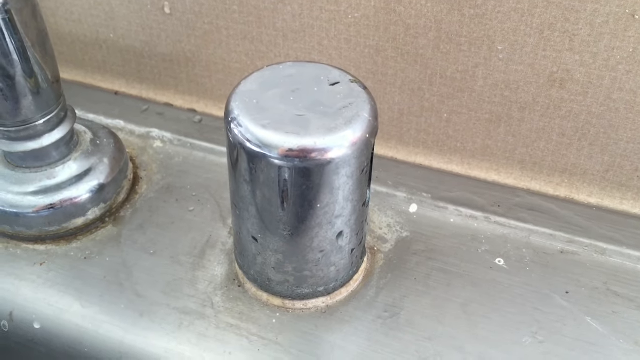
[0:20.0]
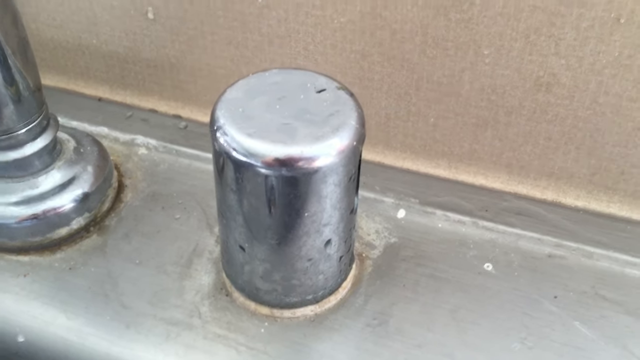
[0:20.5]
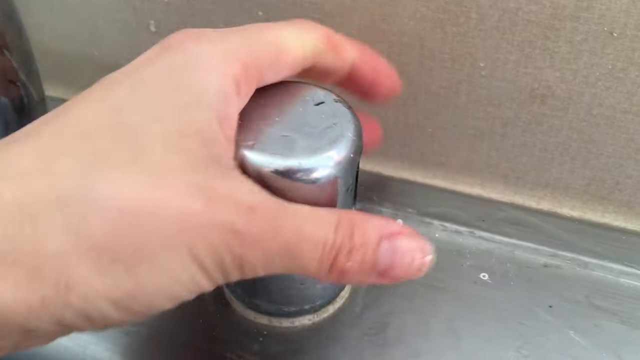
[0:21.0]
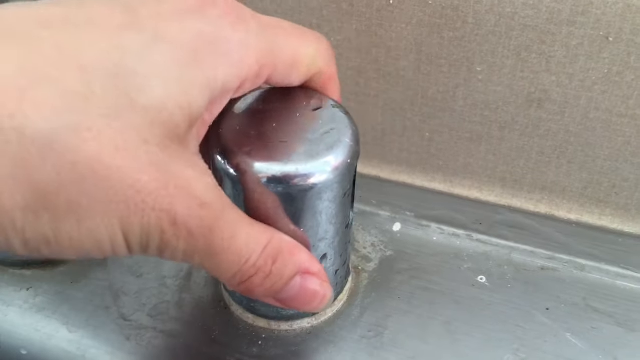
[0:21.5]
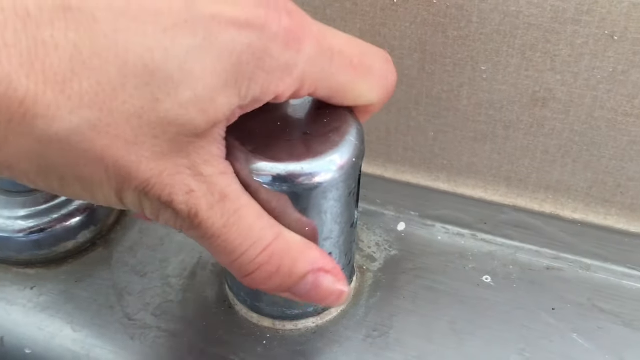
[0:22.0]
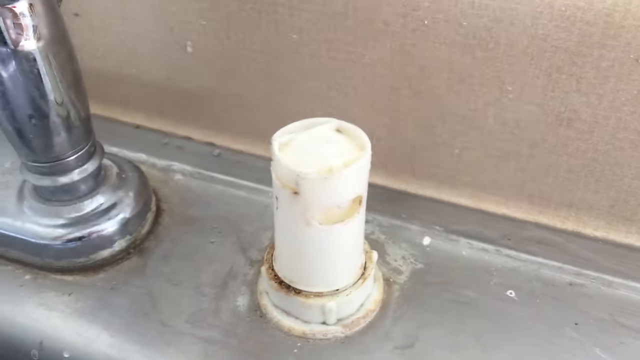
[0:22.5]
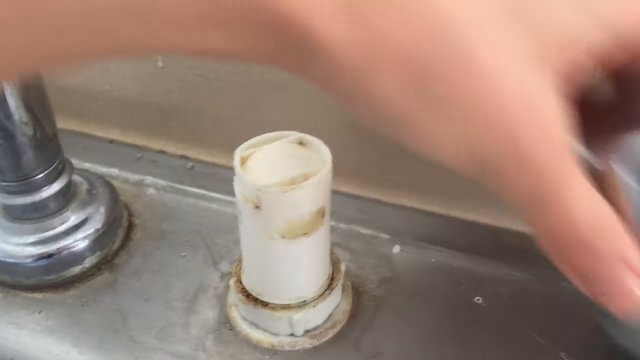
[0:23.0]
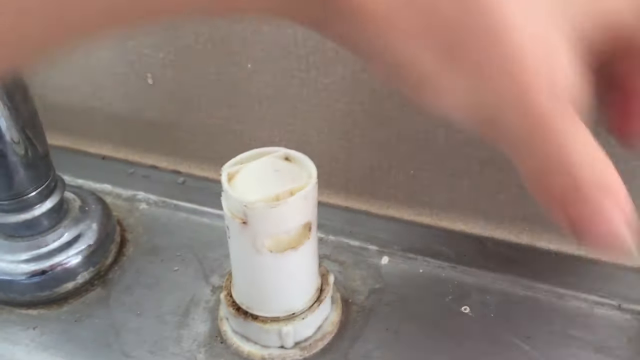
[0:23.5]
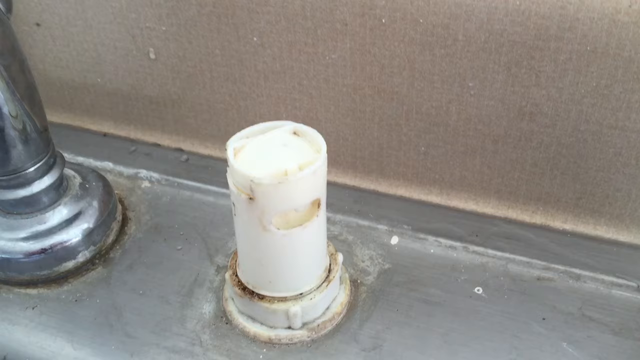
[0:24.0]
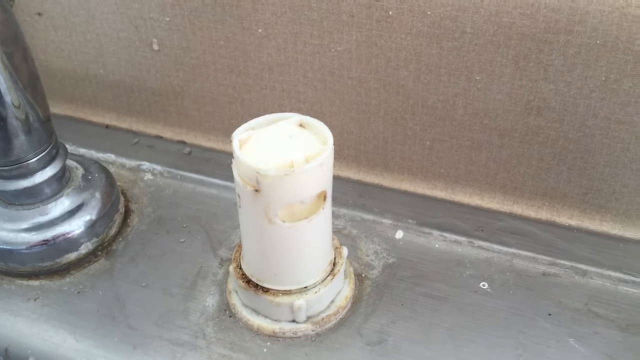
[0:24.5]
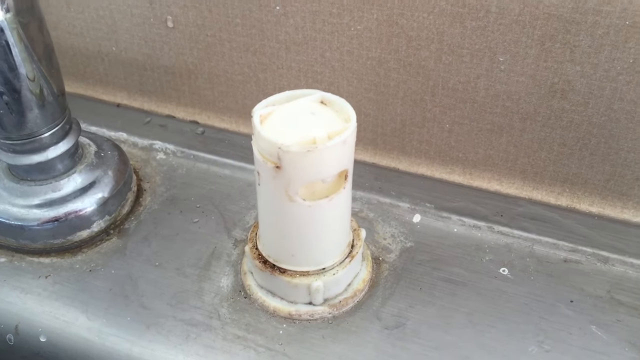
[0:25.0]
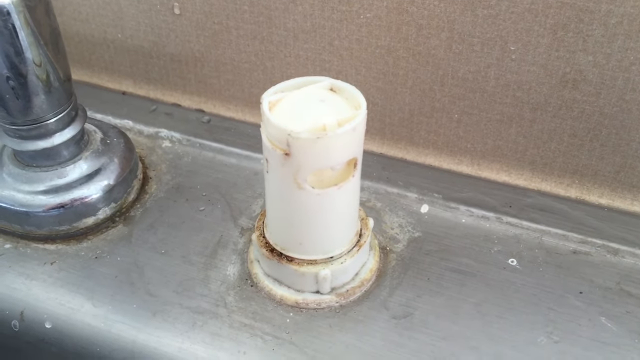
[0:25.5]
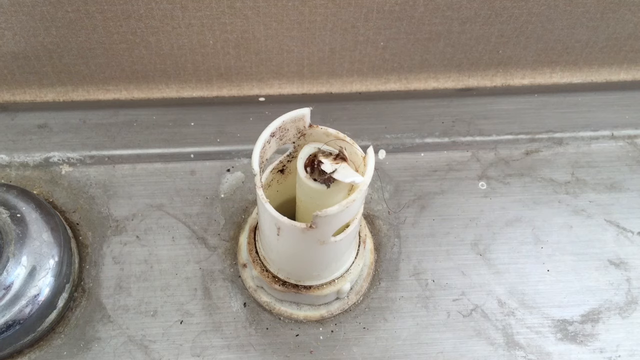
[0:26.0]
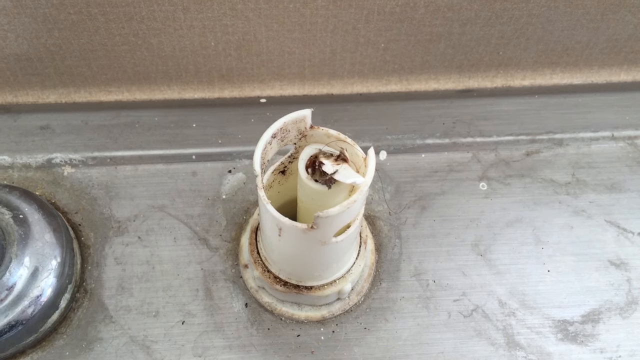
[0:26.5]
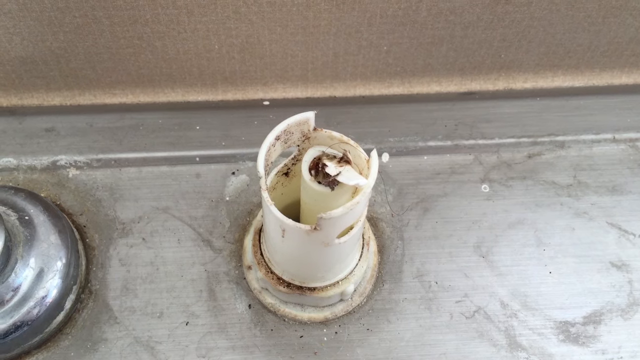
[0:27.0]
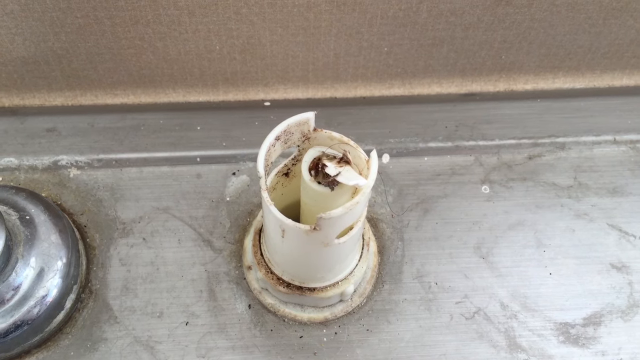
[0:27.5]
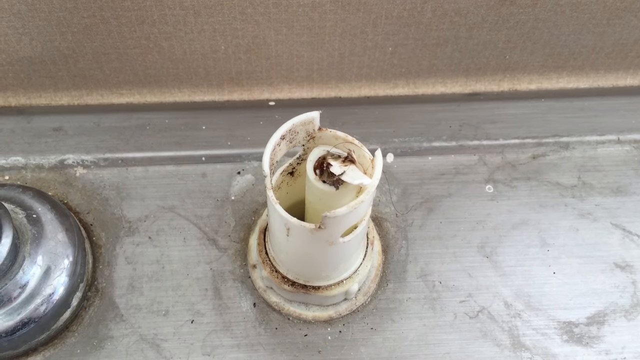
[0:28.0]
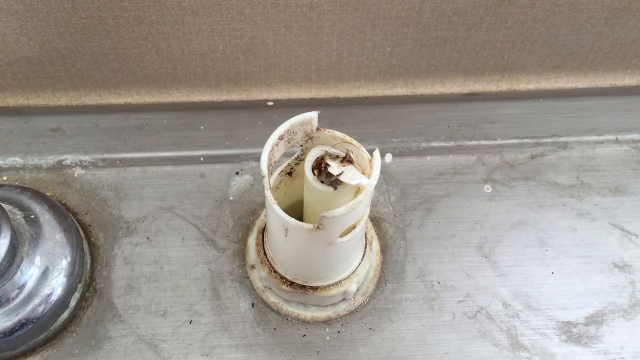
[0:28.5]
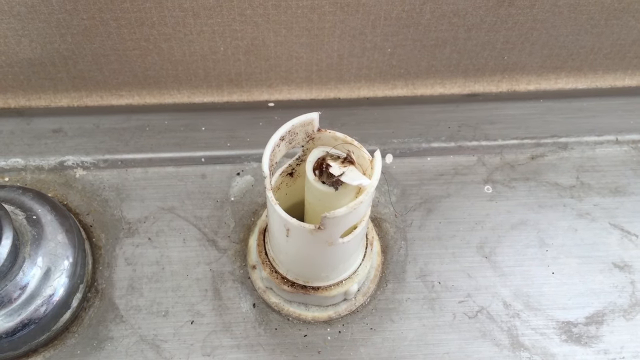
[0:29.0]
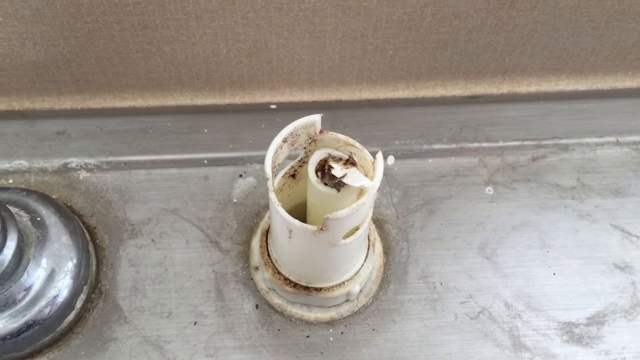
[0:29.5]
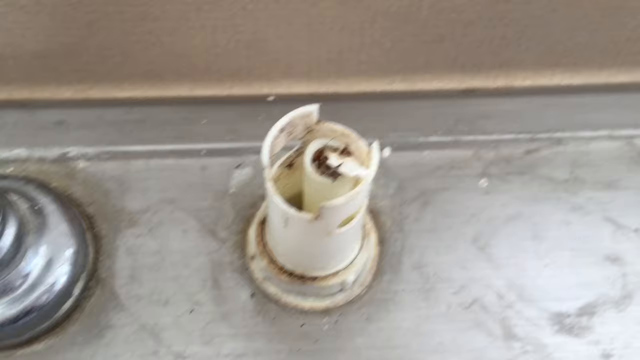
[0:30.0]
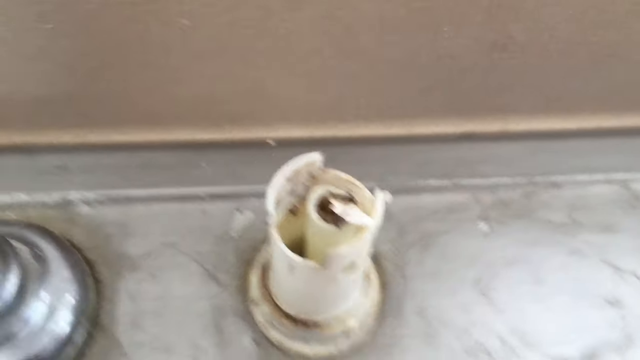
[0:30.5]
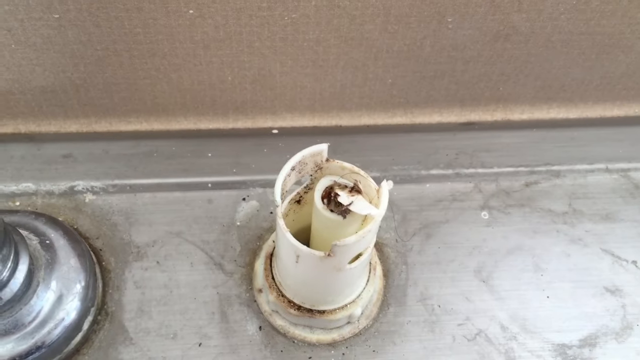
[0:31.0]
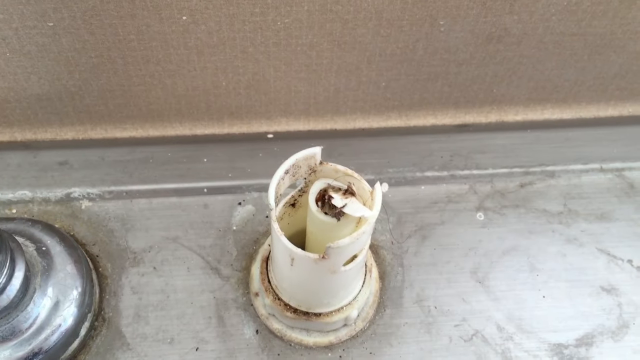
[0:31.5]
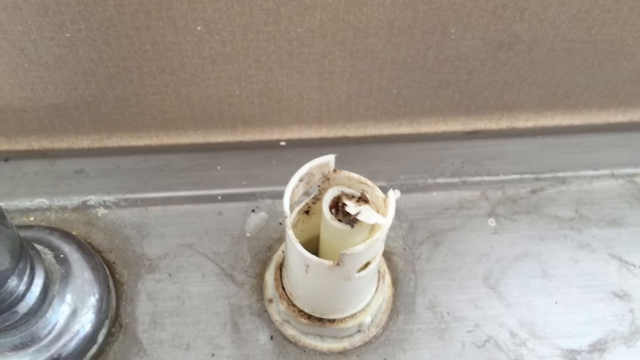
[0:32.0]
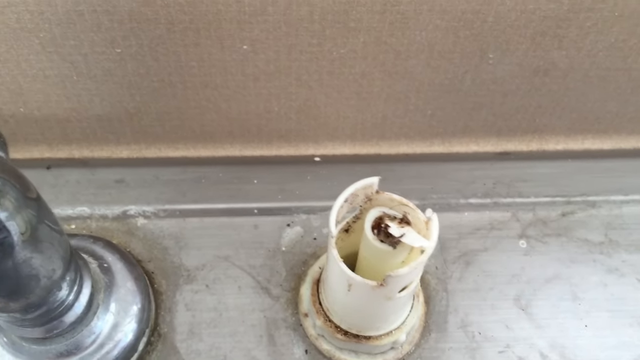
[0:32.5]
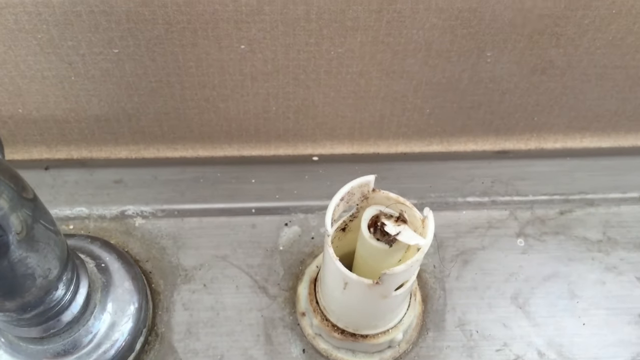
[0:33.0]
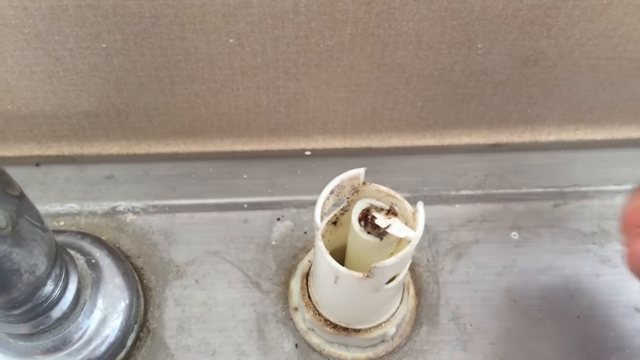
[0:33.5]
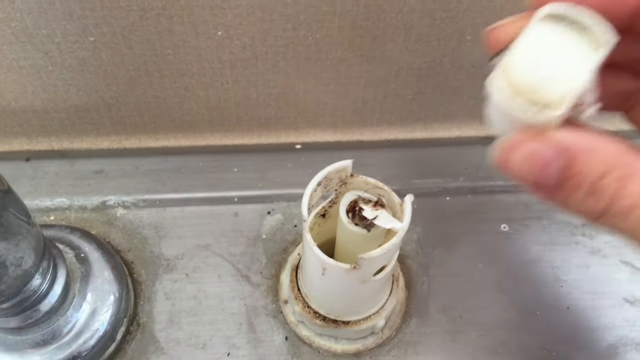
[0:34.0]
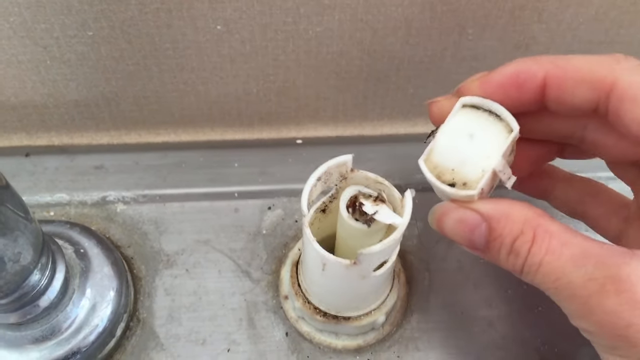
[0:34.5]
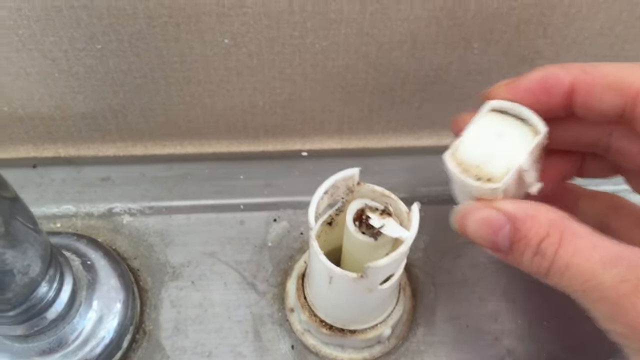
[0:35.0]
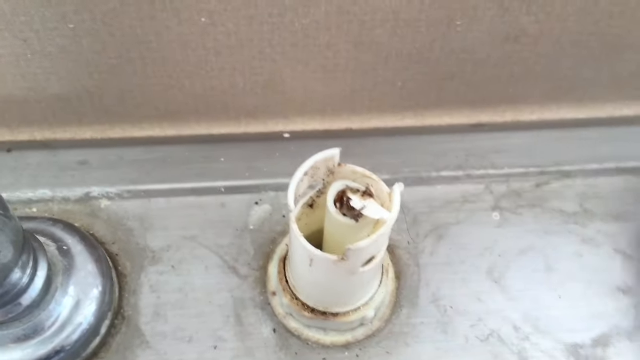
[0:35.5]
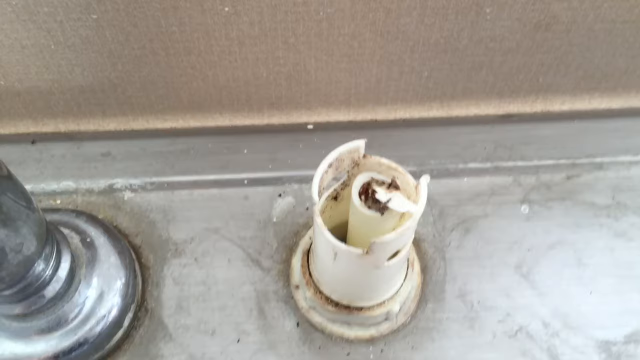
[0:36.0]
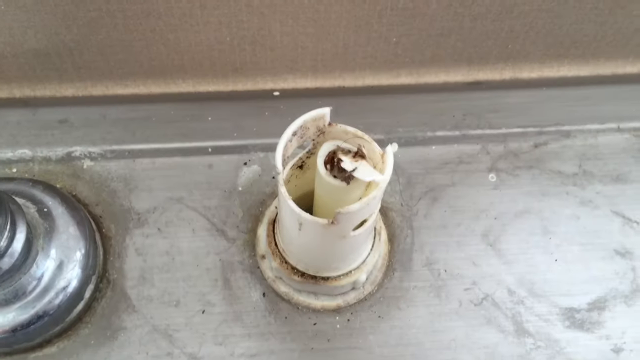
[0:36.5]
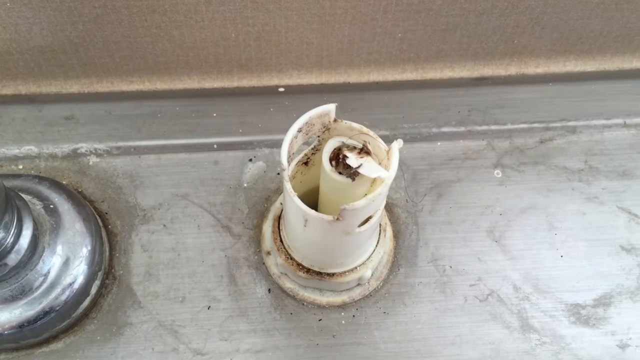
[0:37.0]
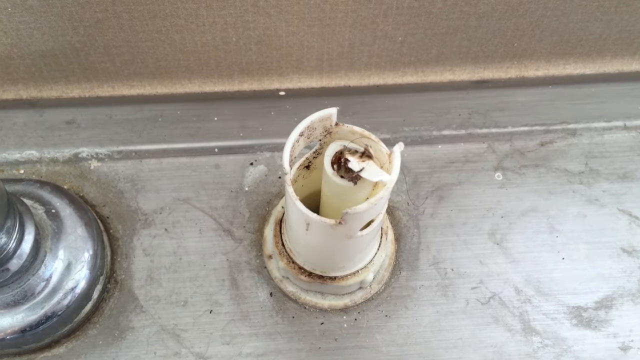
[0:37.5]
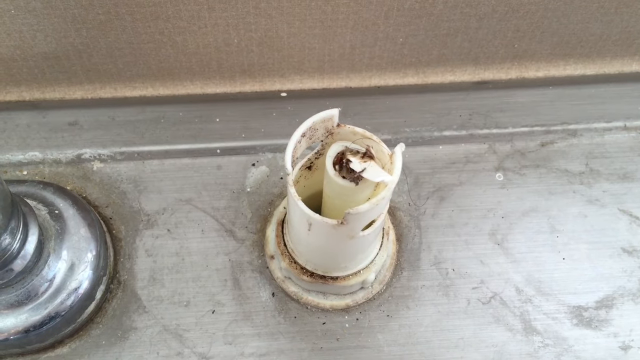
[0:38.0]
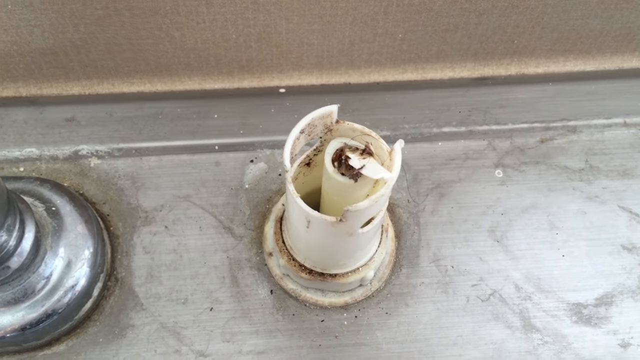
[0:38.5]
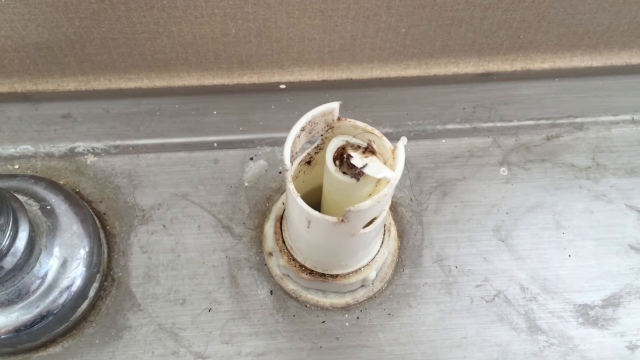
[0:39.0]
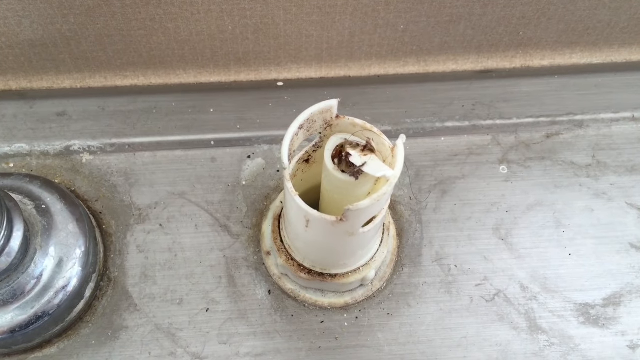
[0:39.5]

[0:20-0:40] The camera is zoomed in and focused on the top of the sink area, where there is a stainless steel dial that is a cap covering a tube or pipe. The person's left hand comes into view, grips the stainless steel cap and removes it, revealing the pipe underneath, which is white but has dirt and black grime and filth on it. The cap is placed to the right side of the pipe, and the camera stays fixed and focused on the white pipe. The shot then cuts to the pipe from a top-down view. The top of the pipe appears broken or a piece was removed, and the inside of the white pipe is visible, with even more grime and dirt, what appears to be chips of plastic and a clog, and a smaller center pipe running through the larger pipe. On the right side of the screen, a right hand comes into view holding what appears to be a cap for the white pipe.